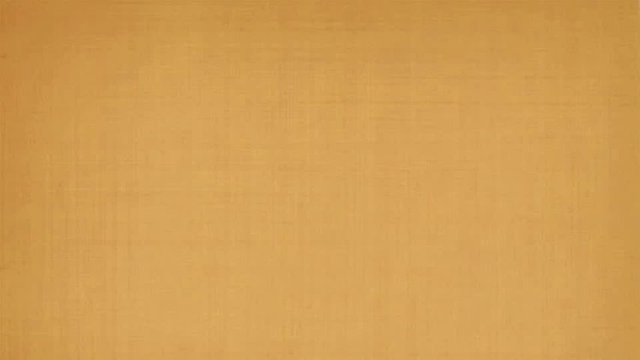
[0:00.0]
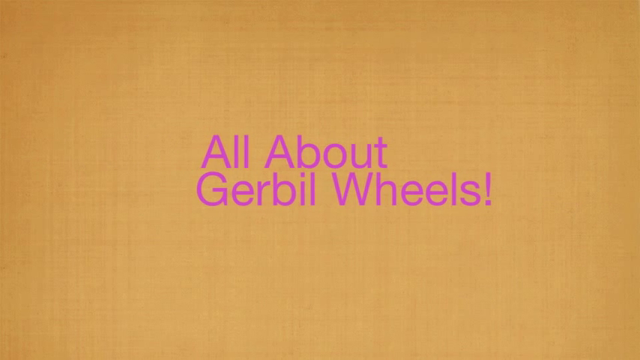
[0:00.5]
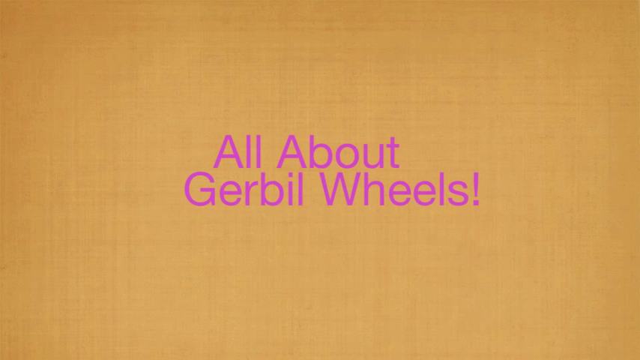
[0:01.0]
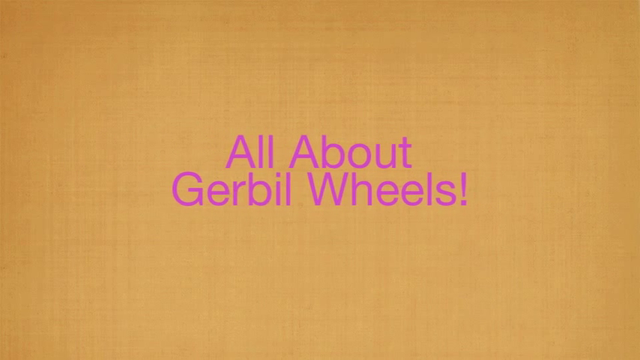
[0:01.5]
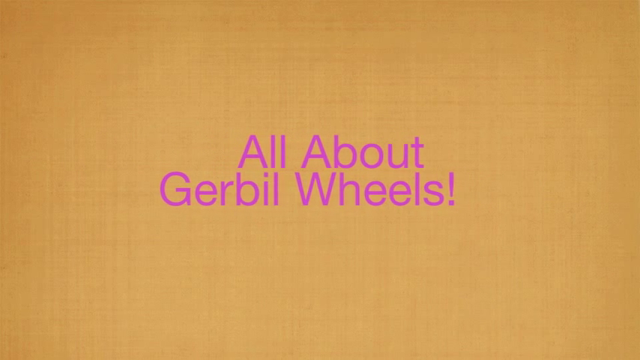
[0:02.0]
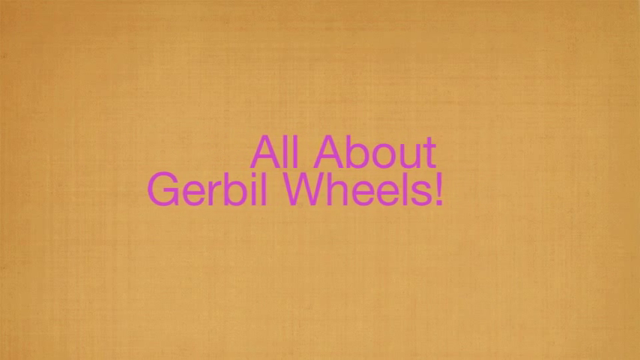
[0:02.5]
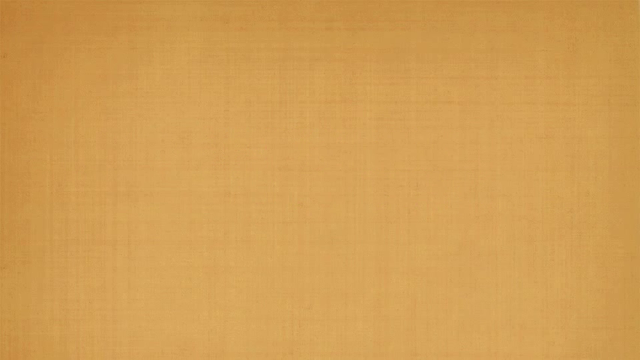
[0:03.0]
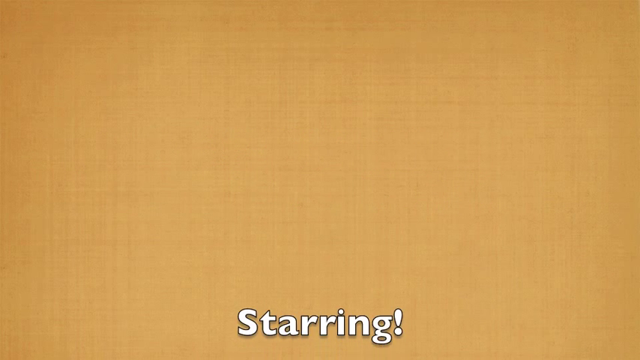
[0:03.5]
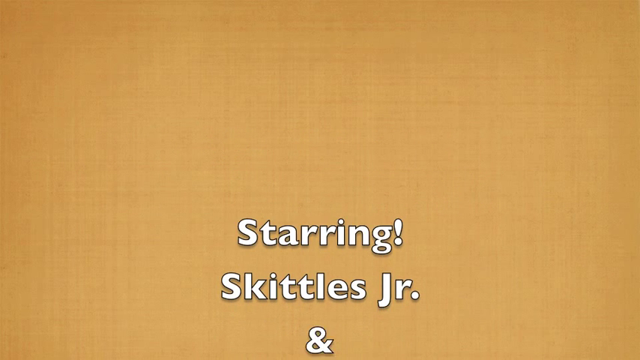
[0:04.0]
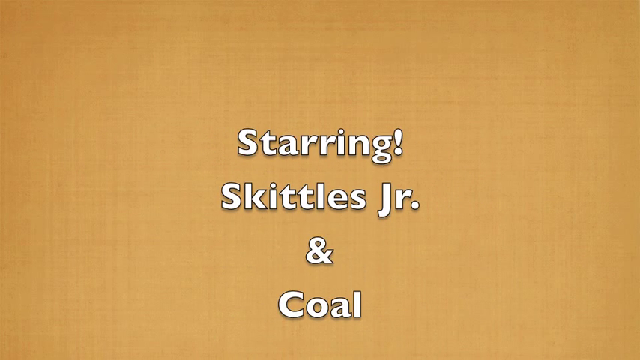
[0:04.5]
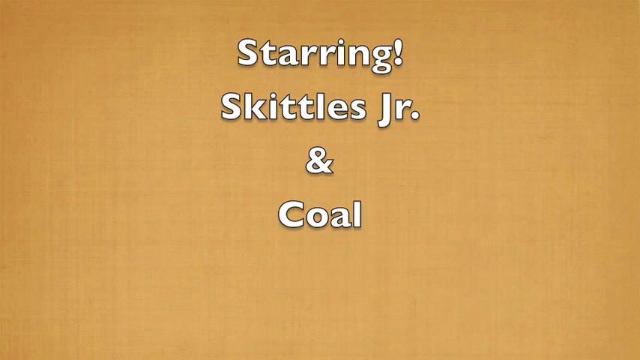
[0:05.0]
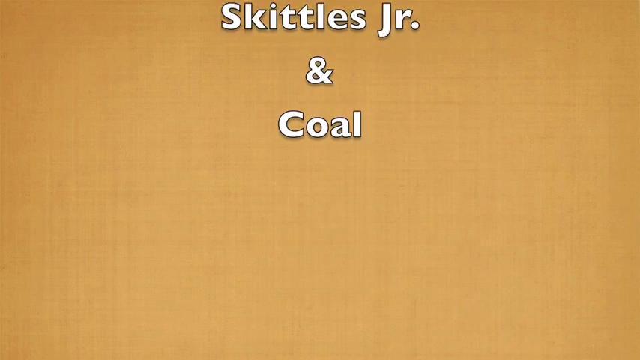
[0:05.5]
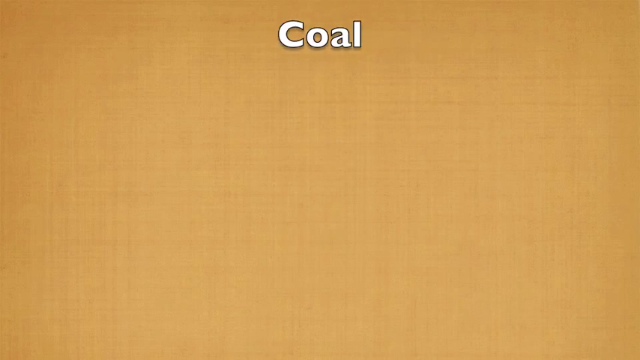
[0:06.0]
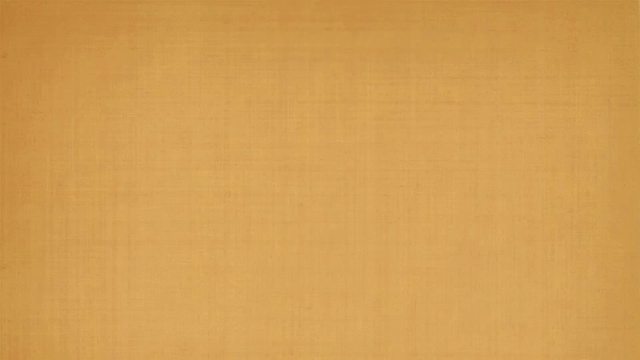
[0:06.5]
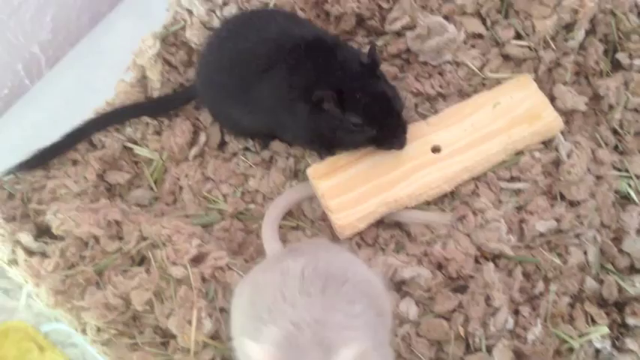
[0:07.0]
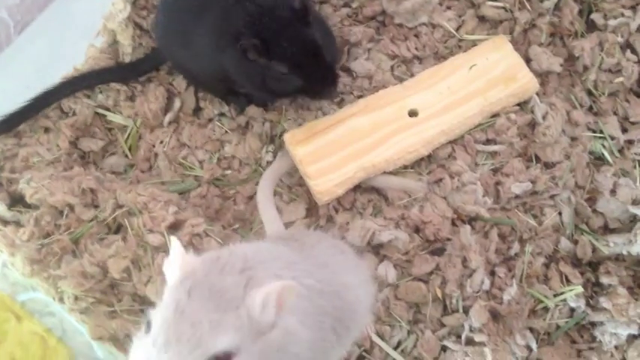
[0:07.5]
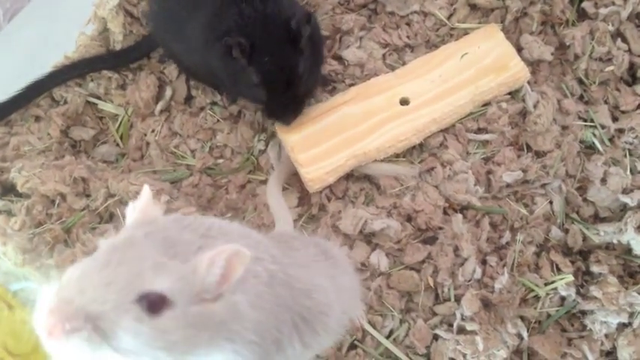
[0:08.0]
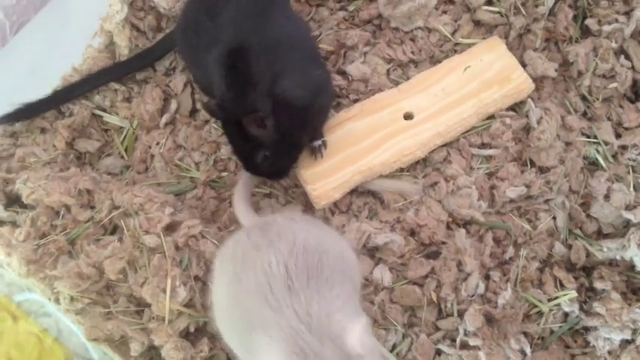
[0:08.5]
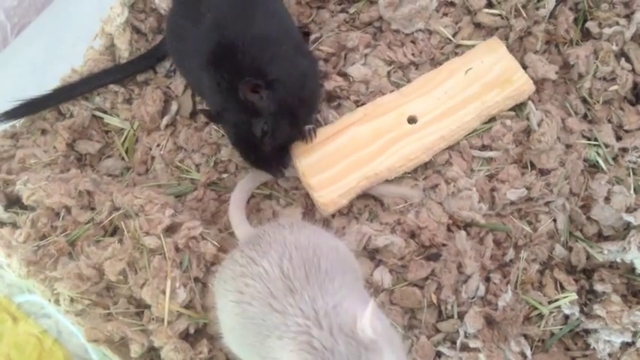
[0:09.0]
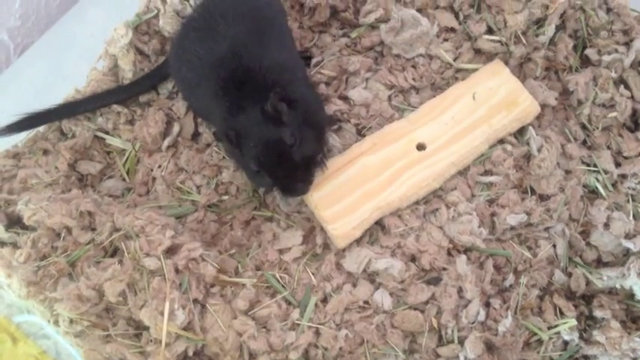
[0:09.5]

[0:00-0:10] An orange background fills the frame, then two lines of pink writing appear in the middle of the screen: the top line comes in from the left and stops in the centre, and the bottom line comes in from the right and stops underneath it. The text reads "All about gerbil wheels!" Both lines then carry on in the directions they were moving, a bit more slowly, and disappear from the screen. White writing then comes up from the bottom: "starring! Skittles Jr! and coal". The video cuts to two gerbils standing on tree bark. A black gerbil with a long black tail appears to be gnawing on a piece of wood, and a white gerbil is in front of it, its white tail just underneath the wood. The white gerbil jumps up to the side of its enclosure before dropping back down, while the black one is clearly still gnawing on the wood.